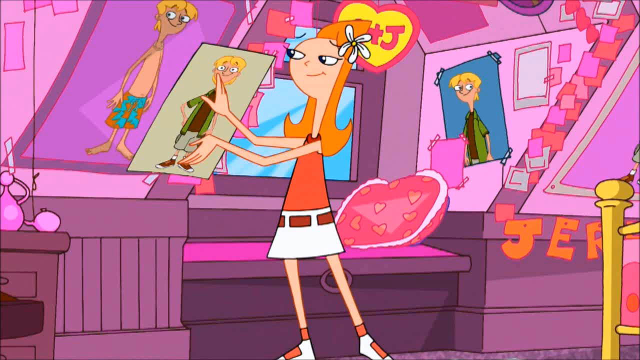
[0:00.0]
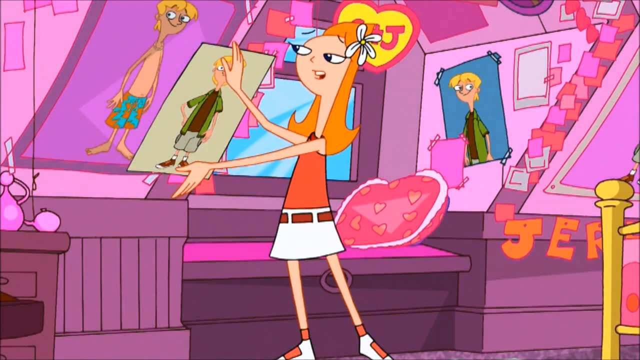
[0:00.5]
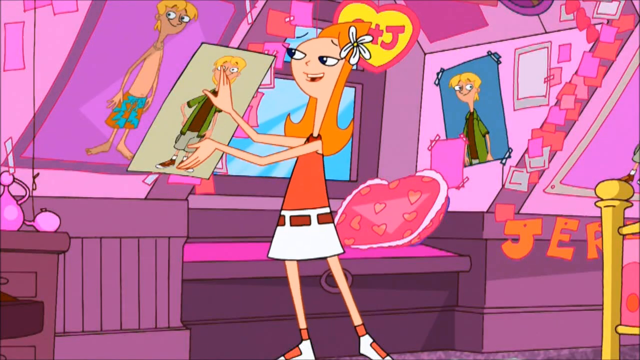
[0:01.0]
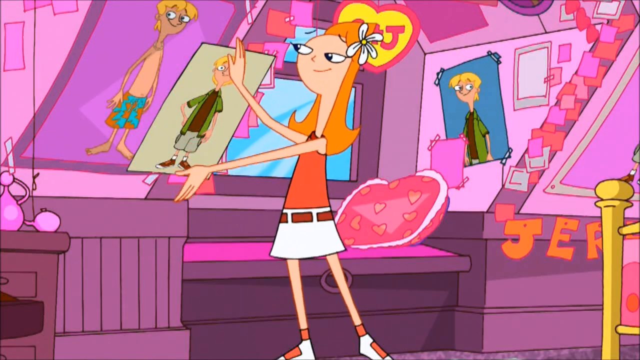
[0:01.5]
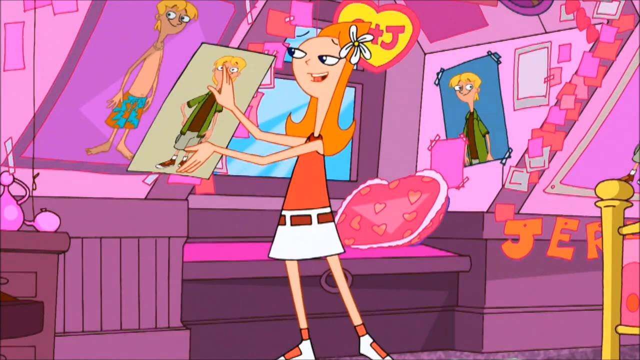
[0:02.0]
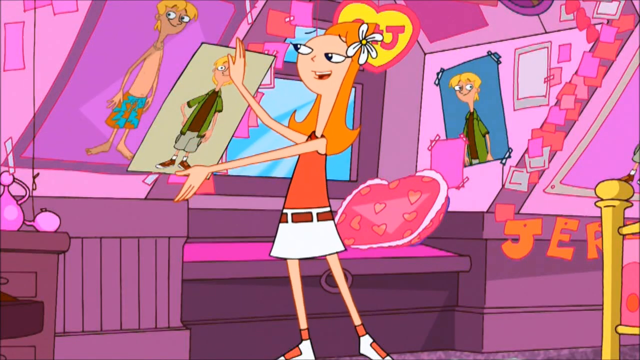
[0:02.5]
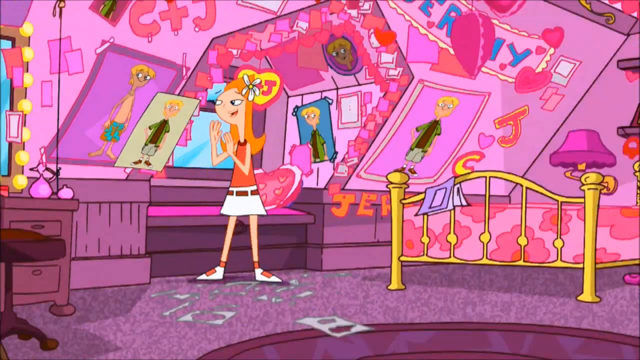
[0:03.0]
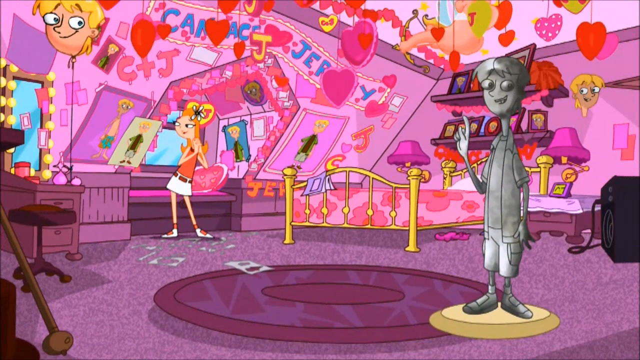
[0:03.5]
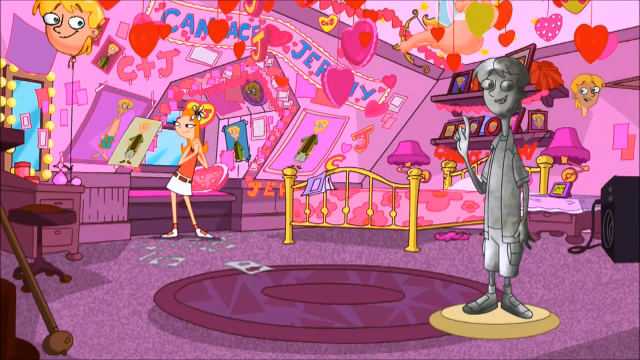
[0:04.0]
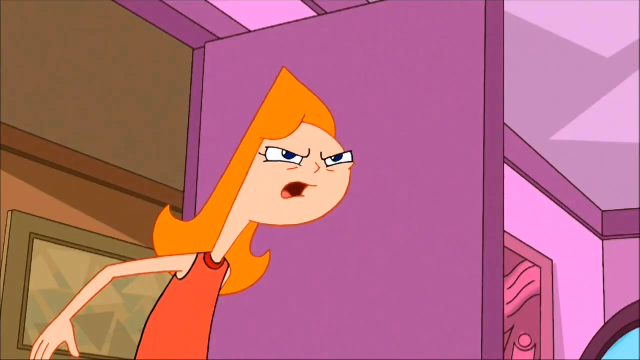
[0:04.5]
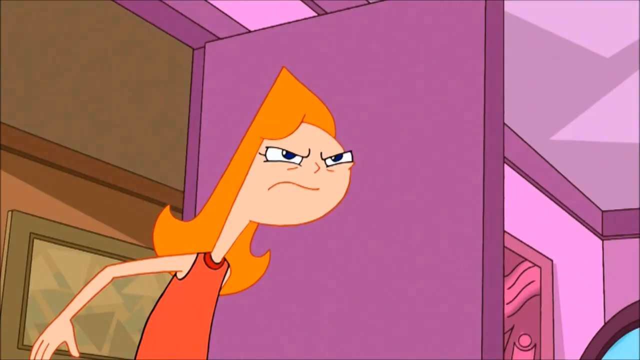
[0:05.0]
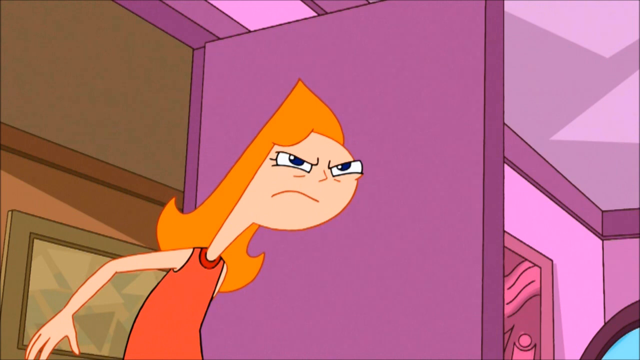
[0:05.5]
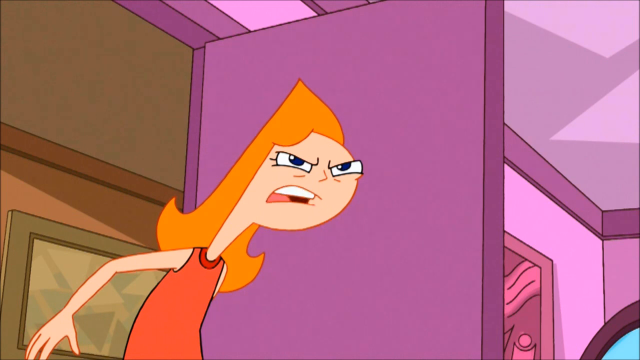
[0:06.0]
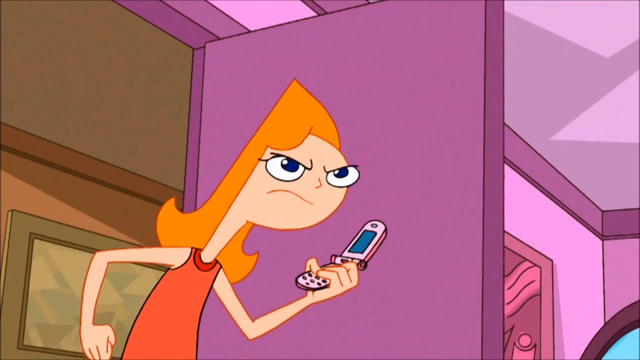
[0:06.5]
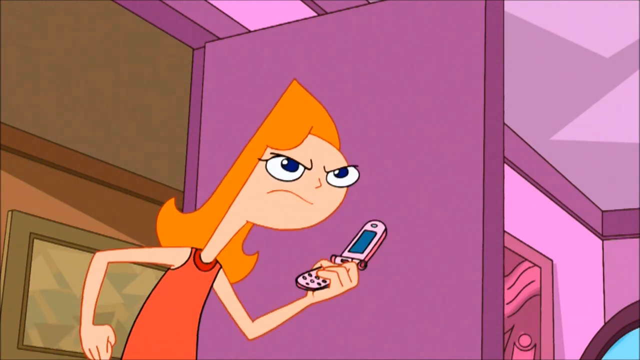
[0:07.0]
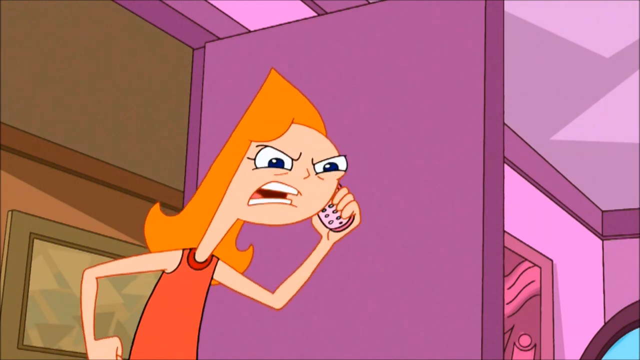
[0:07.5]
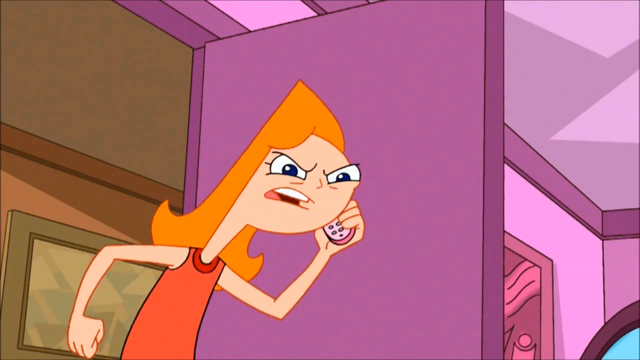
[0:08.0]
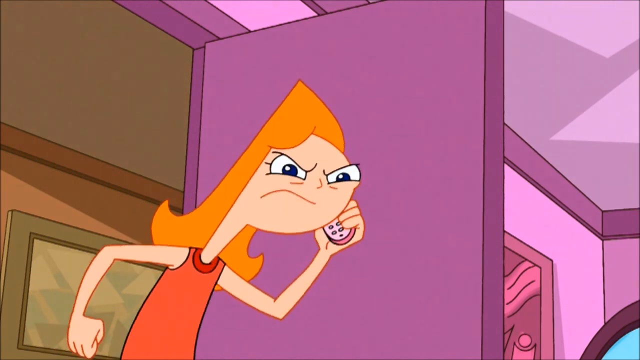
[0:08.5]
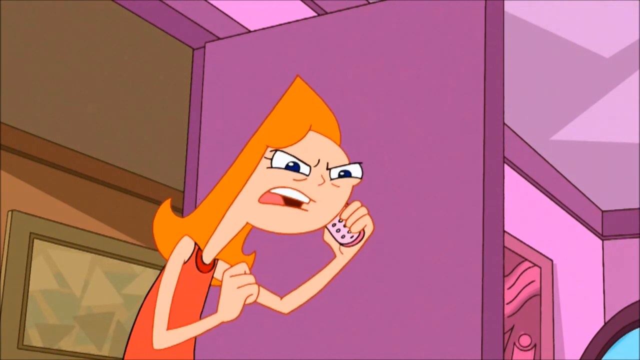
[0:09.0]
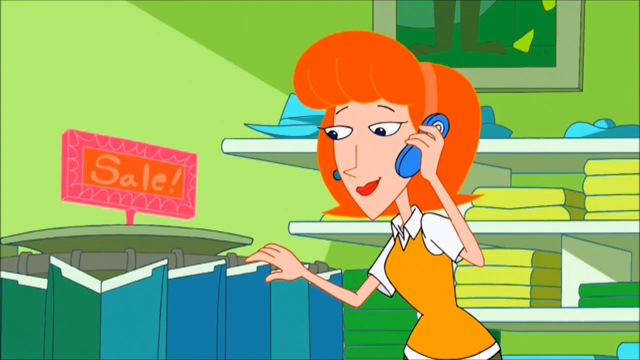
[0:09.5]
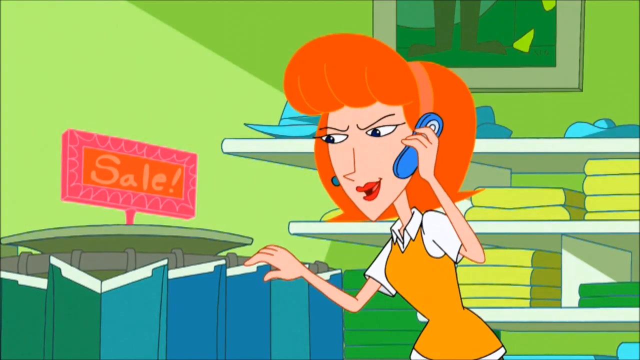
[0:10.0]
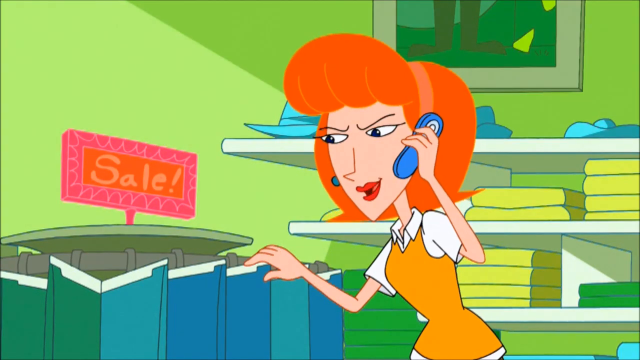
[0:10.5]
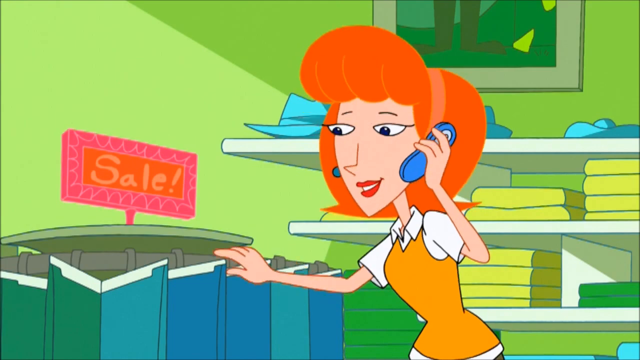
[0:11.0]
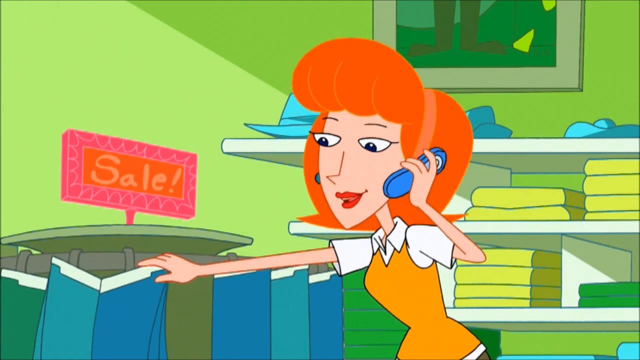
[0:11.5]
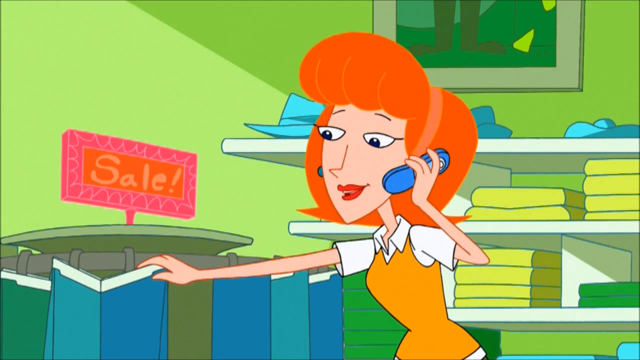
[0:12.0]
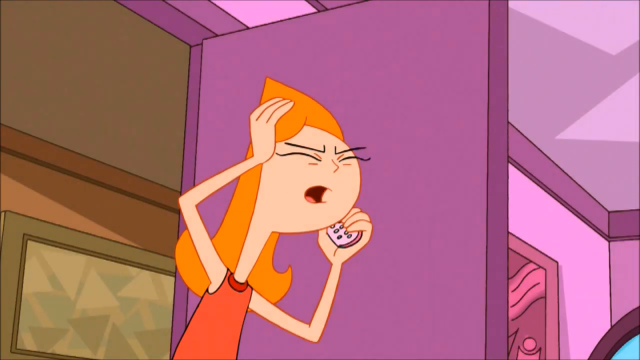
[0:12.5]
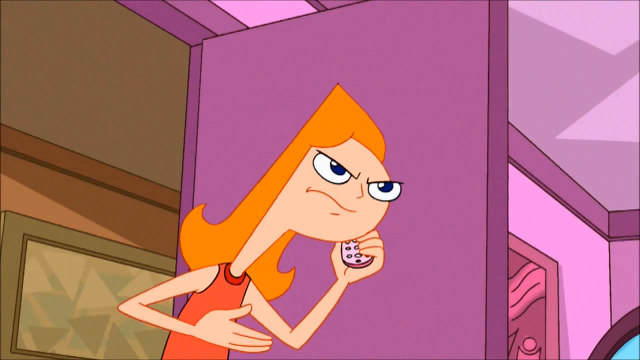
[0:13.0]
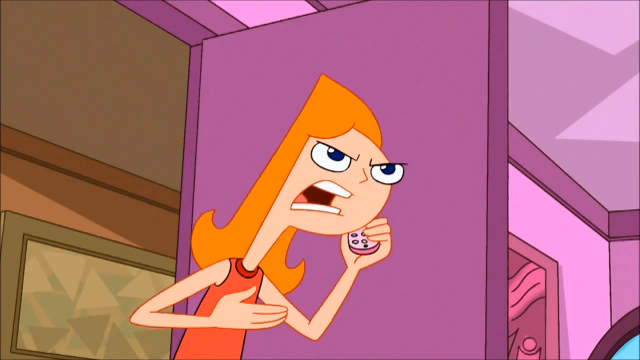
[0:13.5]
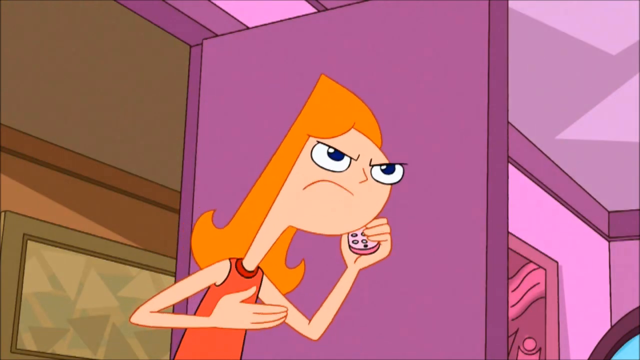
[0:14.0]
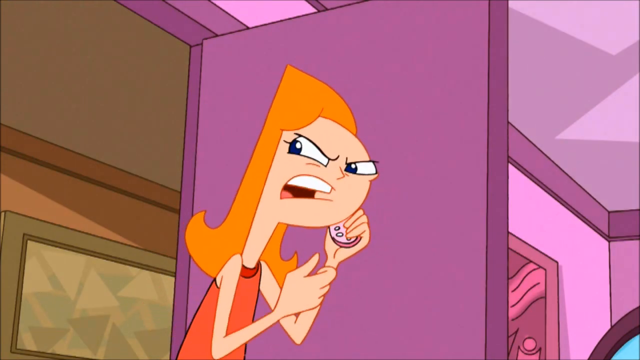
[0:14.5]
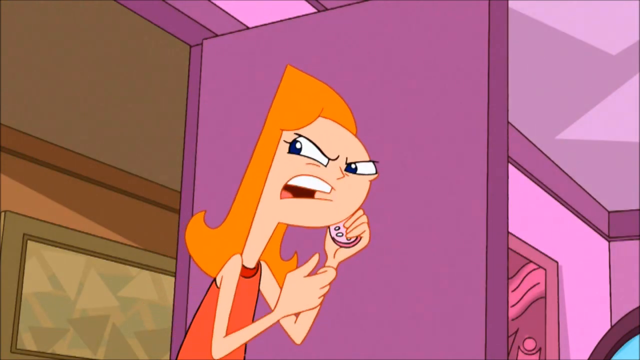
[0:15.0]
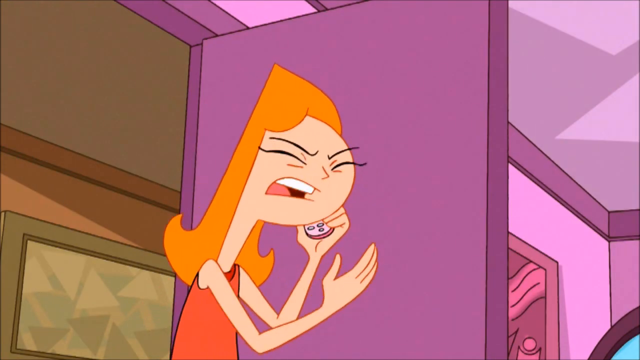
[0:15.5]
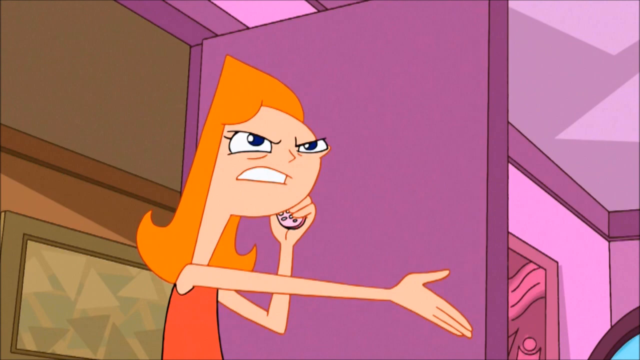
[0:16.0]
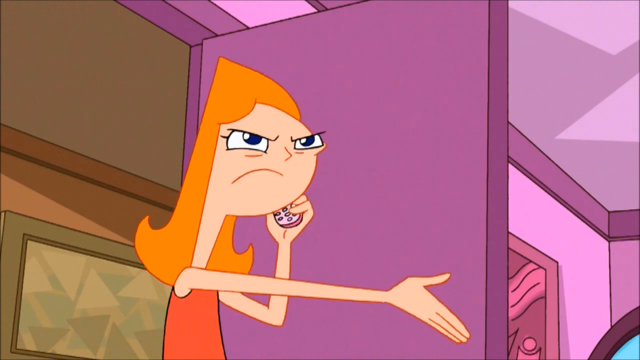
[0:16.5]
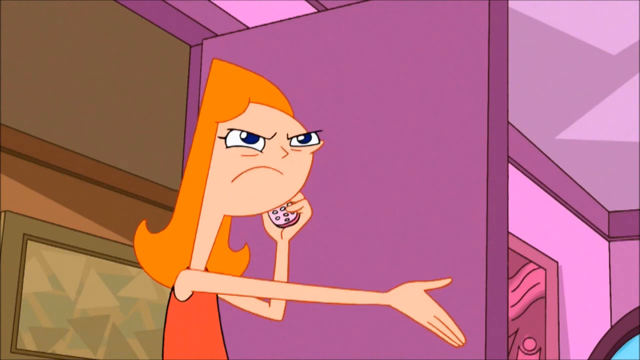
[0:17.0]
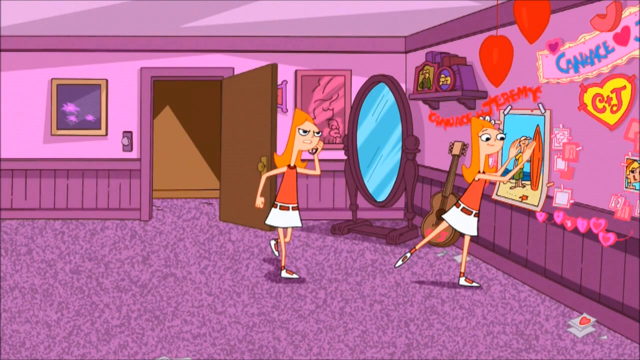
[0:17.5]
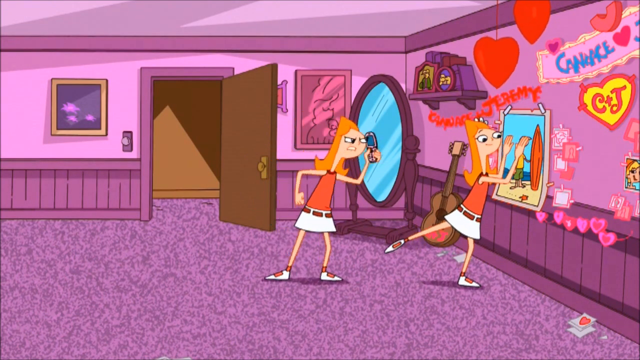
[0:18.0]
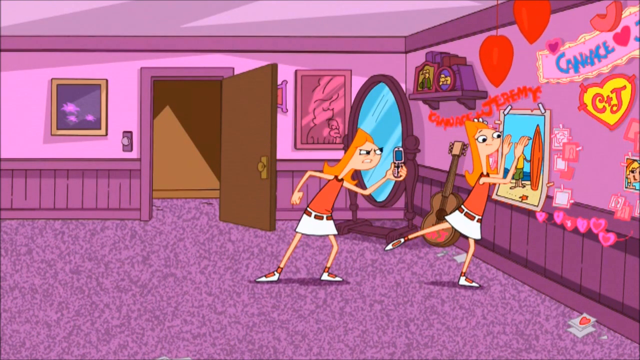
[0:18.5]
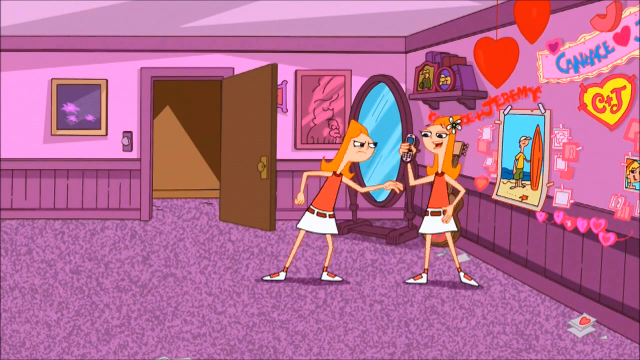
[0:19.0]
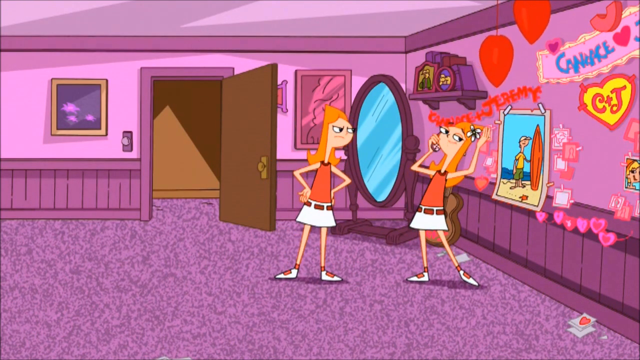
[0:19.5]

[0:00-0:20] A very colorful scene shows an anime girl with orange hair, drawn in a very straight, stick-like style with orange stick legs and a triangle-shaped body. She is hanging up images of a blonde-haired boy she thinks is cute: one picture shows him standing in a swimsuit, and another shows him standing in a green shirt and shorts. She posts these pictures around her room, where there are little heart pillows and little hearts hanging all over; the girl is madly in love with the boy. As the view zooms out, the room is revealed to be a shrine to him. The girl's mother comes in, very angry, and makes a phone call; she says, "Your son has made my daughter go crazy, I'm sick of this, you need to have a talk." As she does, the daughter comes to the phone and is handed the phone with her crush's mother on the line.